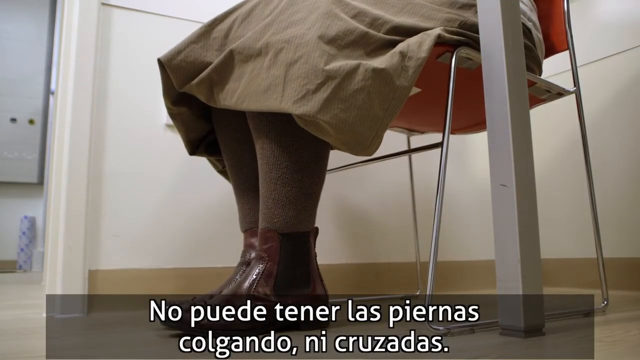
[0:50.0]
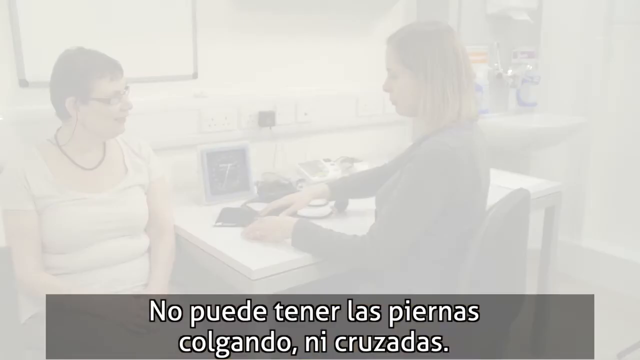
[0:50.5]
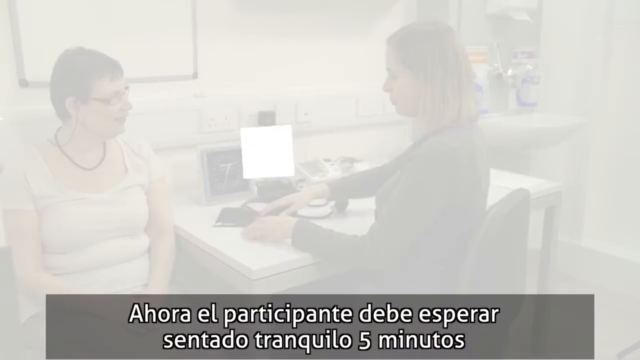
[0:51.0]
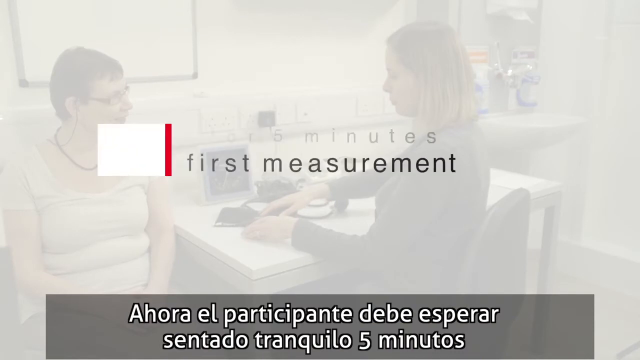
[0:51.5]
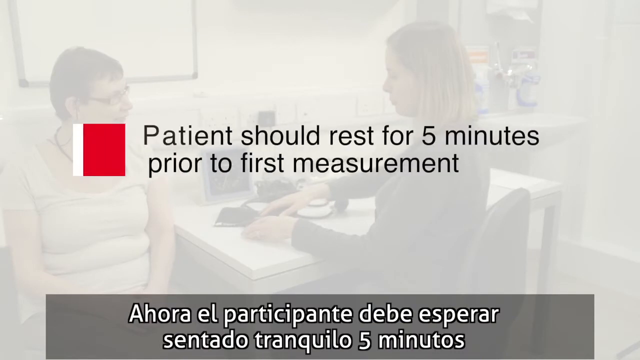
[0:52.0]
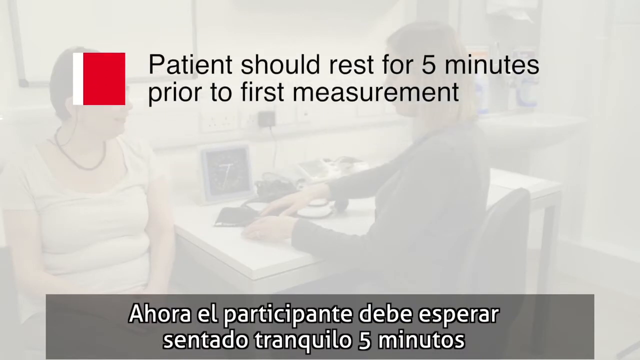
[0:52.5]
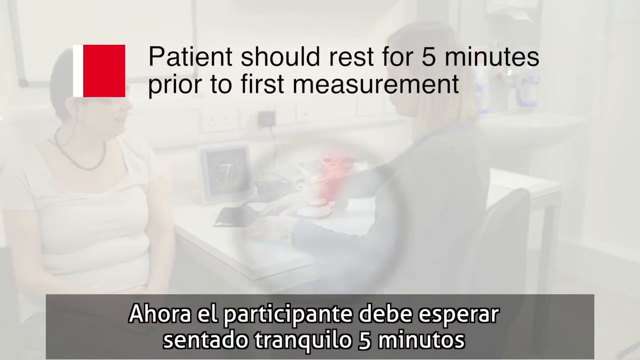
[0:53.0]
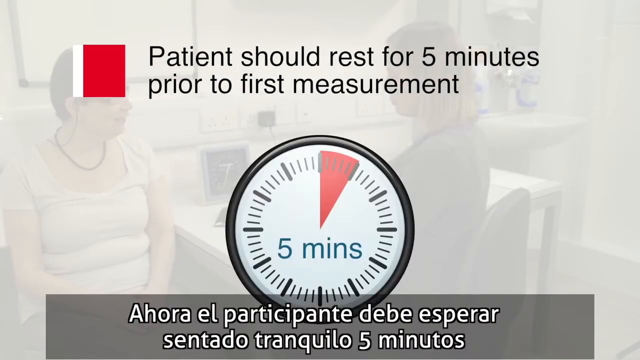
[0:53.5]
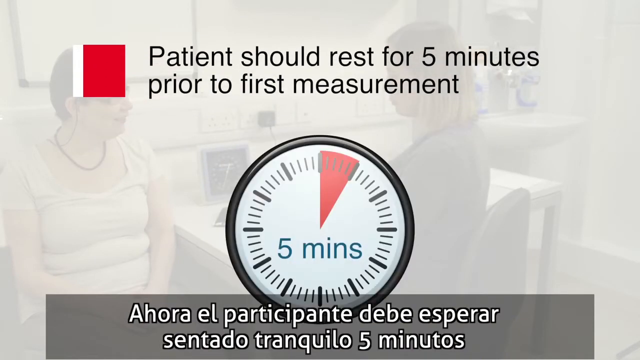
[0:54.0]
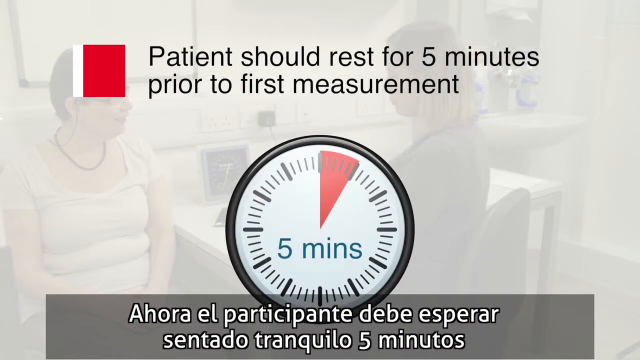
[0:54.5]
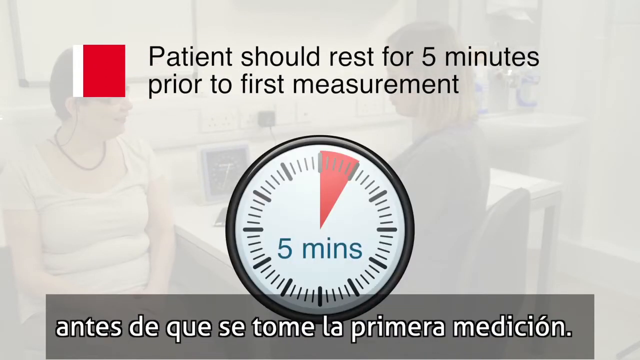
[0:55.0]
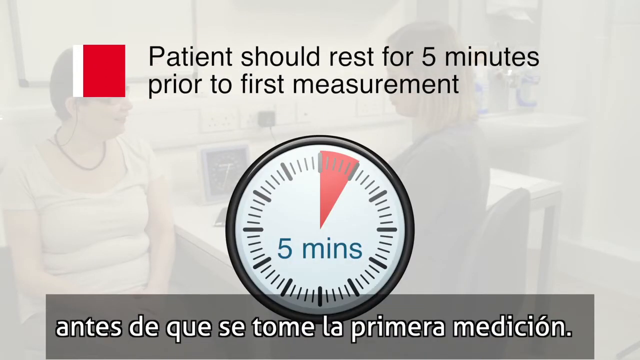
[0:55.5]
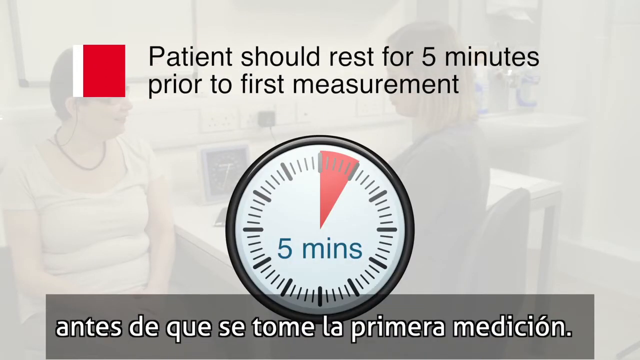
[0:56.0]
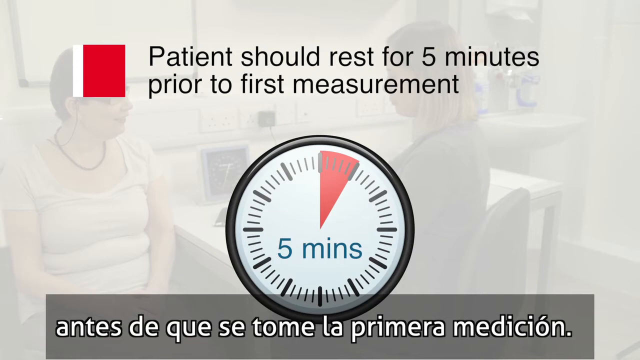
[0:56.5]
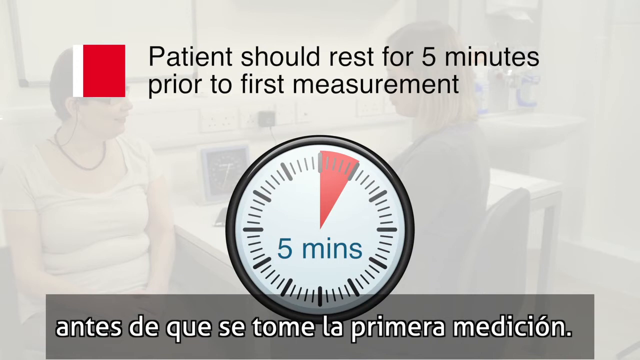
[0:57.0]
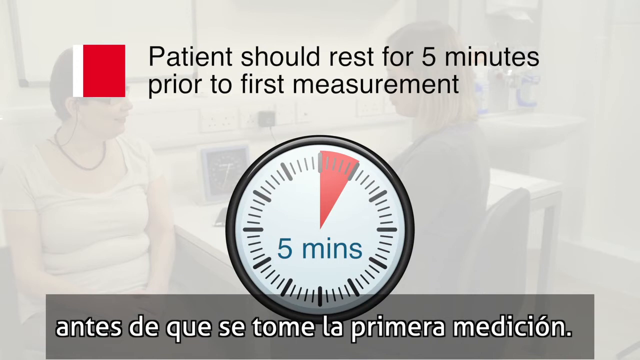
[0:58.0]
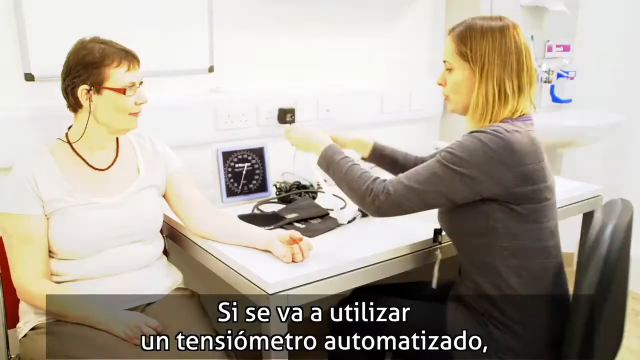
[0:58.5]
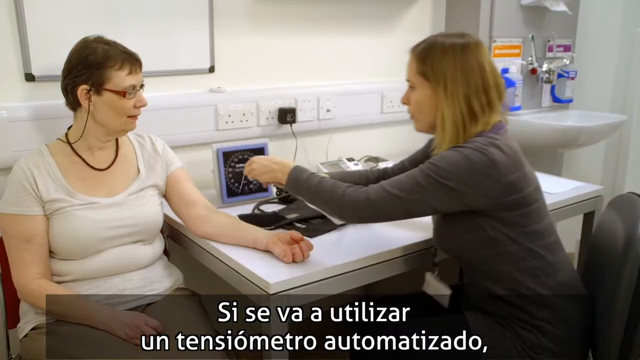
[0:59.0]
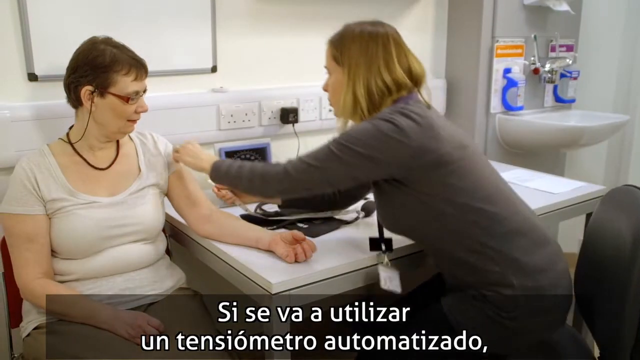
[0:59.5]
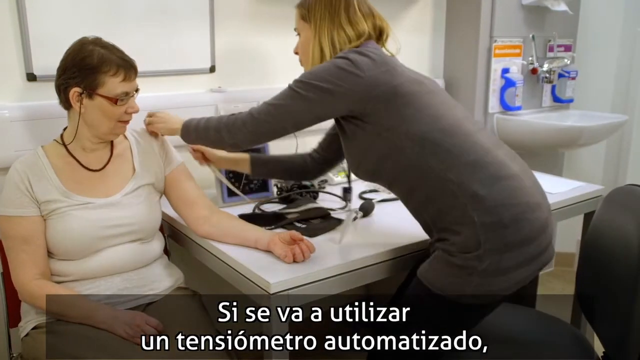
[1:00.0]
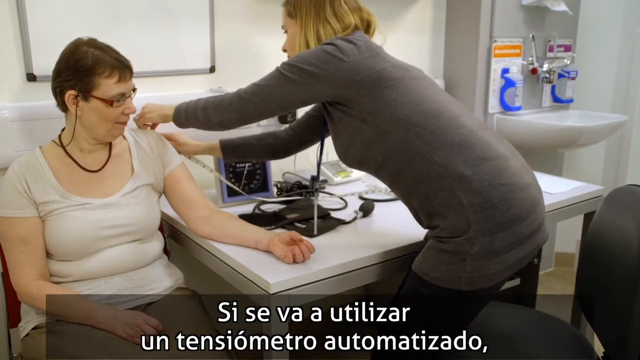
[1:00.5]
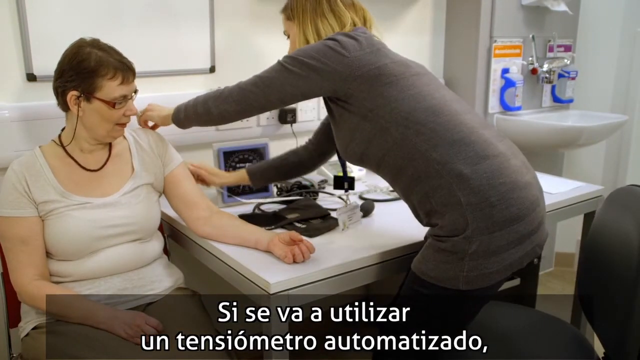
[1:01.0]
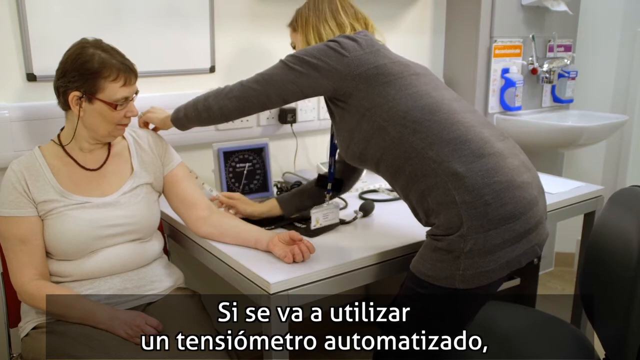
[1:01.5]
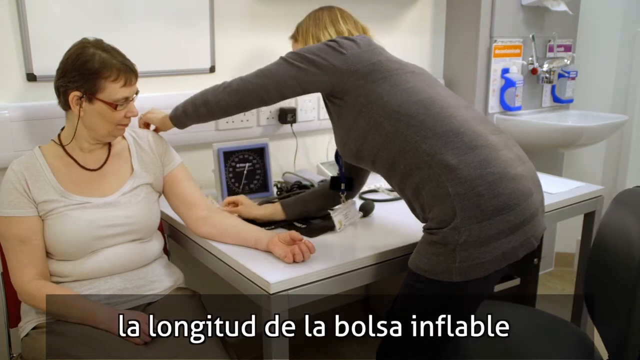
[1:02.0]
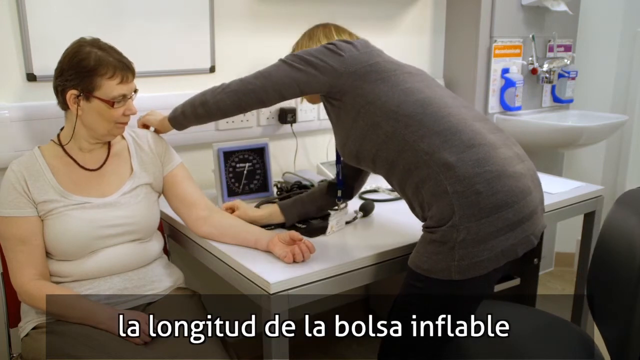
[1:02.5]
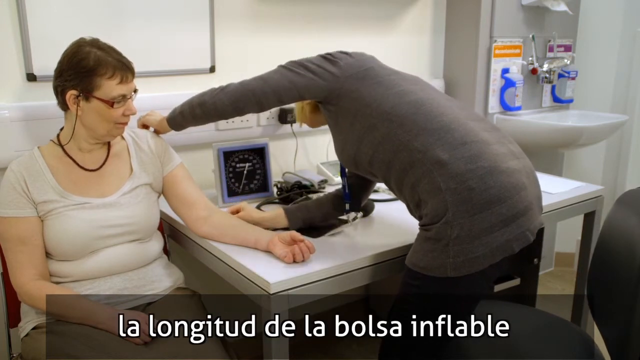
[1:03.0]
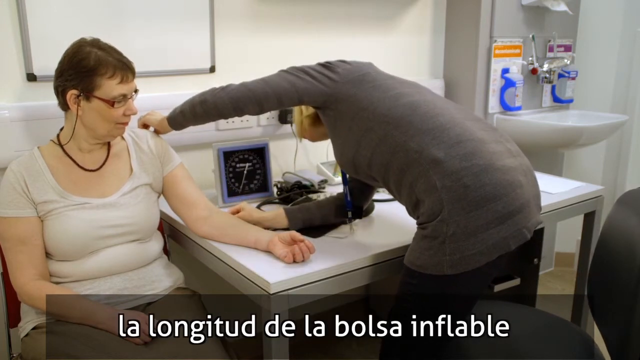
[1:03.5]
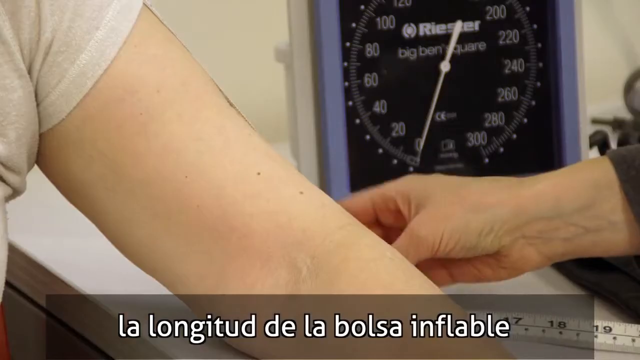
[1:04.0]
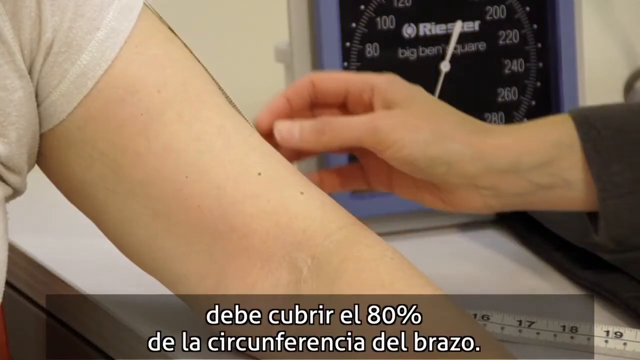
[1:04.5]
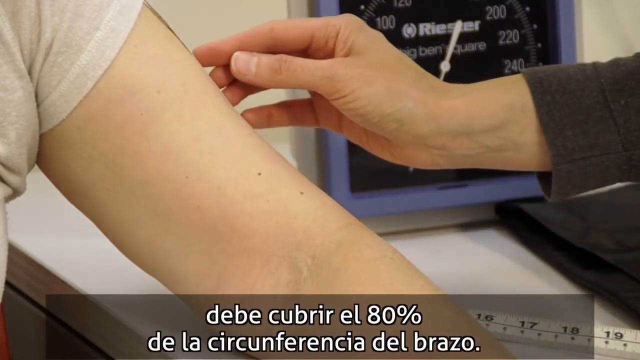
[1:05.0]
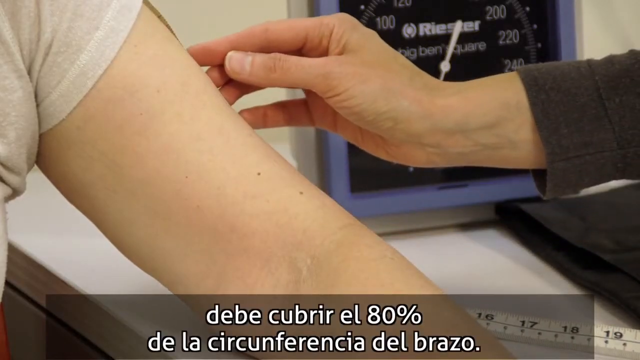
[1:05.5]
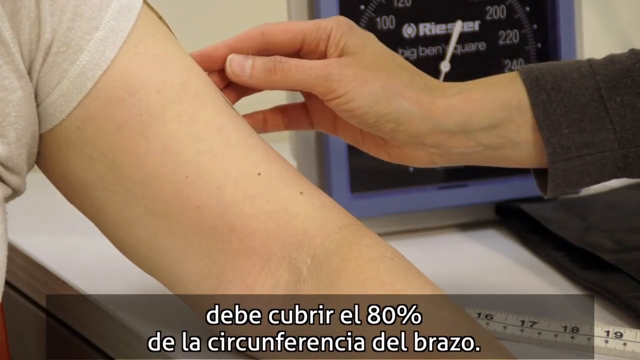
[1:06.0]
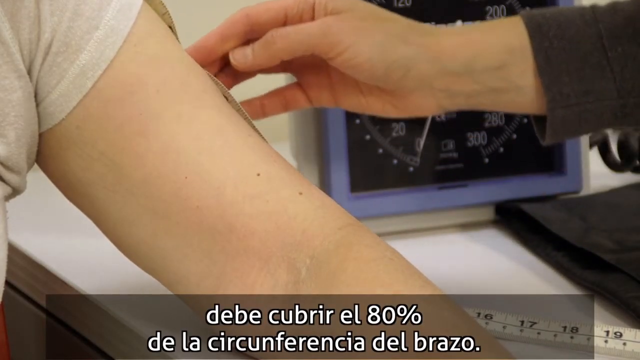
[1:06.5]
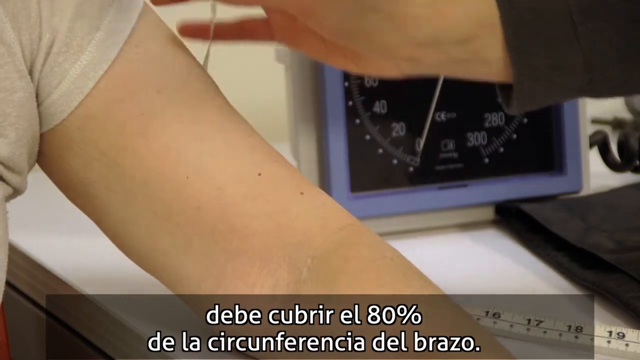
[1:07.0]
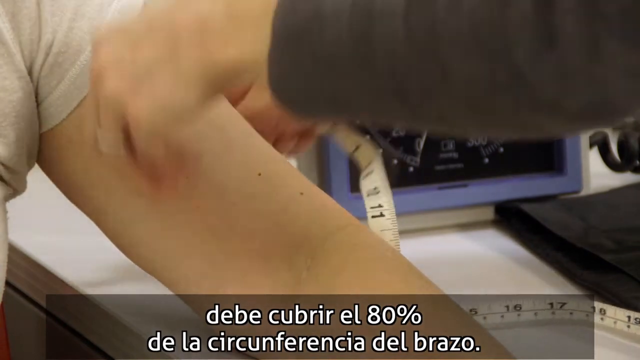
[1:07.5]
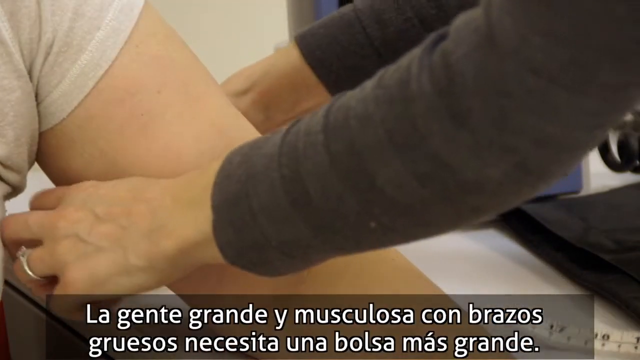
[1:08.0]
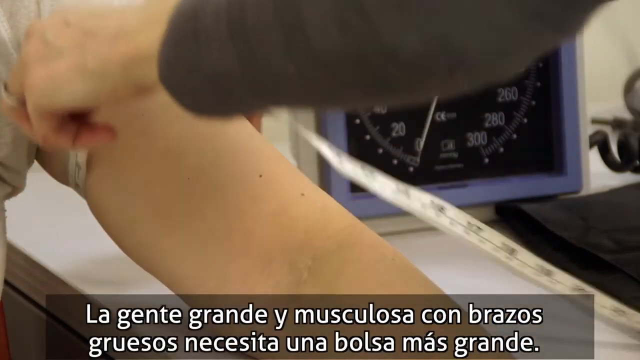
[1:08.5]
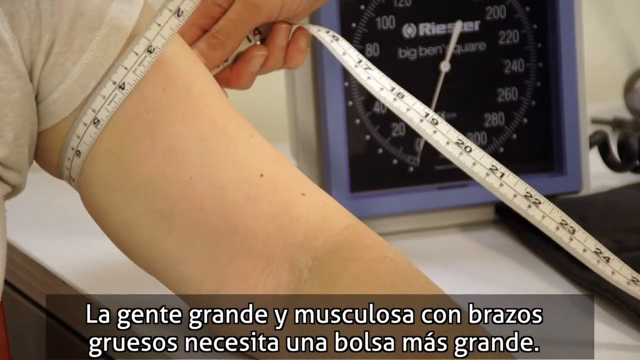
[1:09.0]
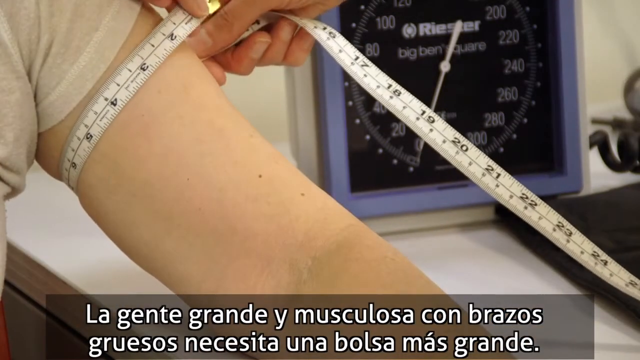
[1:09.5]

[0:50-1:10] The bottom of a woman's legs is shown as she sits at a table, with a light picture in the background of the woman sitting near a nurse or doctor at their desk. A red and white rectangle is on the left, and in the middle area, above a clock, black text reads "patient should rest for five minutes prior to first measurement." The clock in the middle shows a small triangular section, a slice of the clock marking five minutes. After the woman has rested, her arm is measured from top to bottom with a cloth measuring strip, and then around the bicep area.